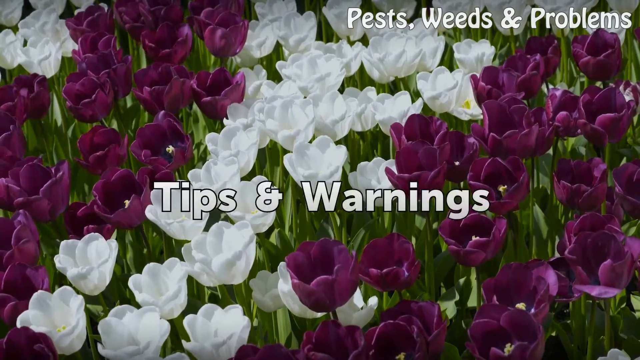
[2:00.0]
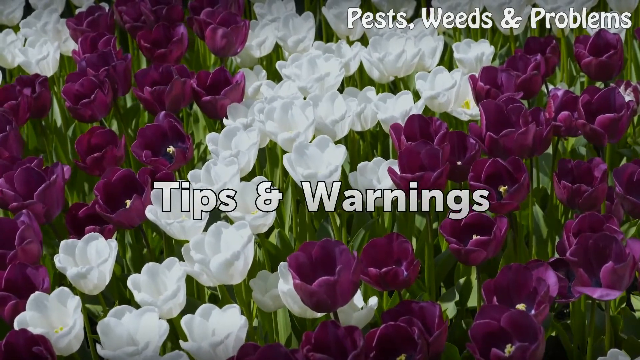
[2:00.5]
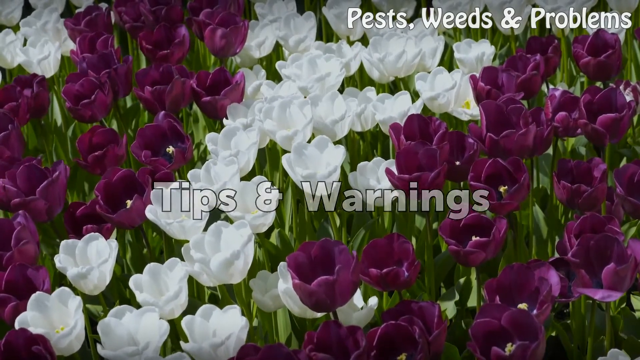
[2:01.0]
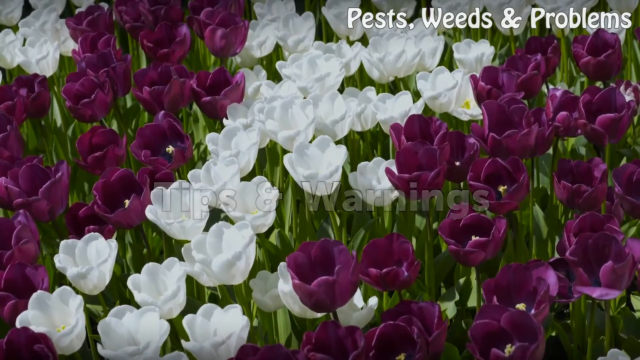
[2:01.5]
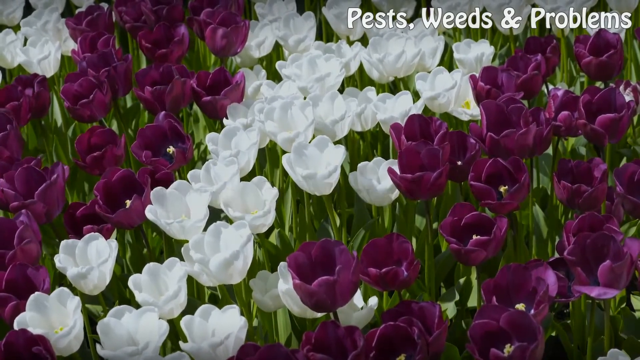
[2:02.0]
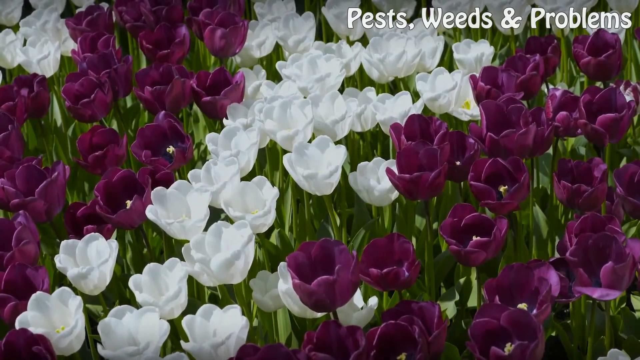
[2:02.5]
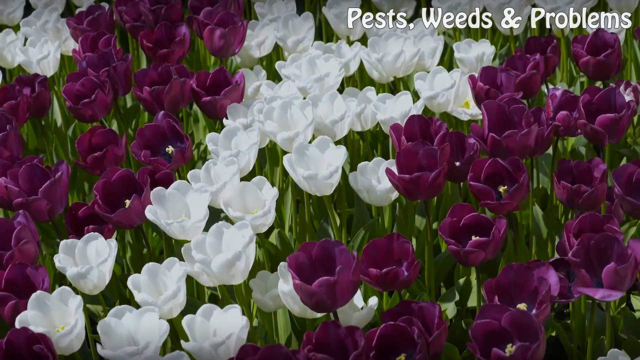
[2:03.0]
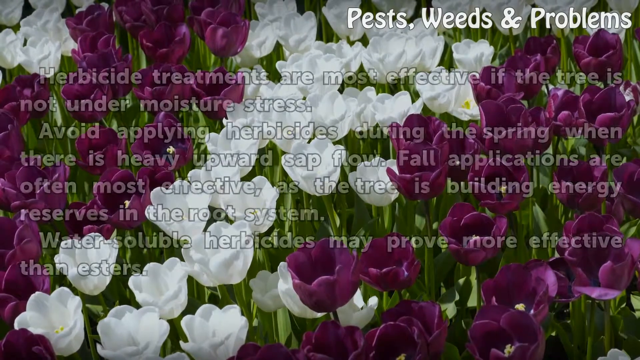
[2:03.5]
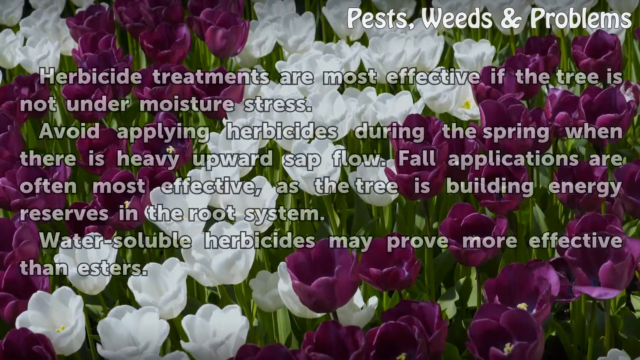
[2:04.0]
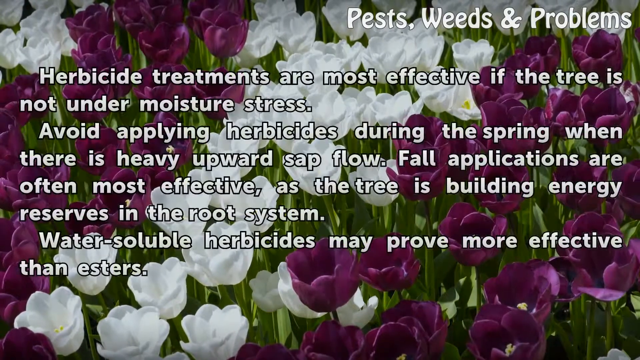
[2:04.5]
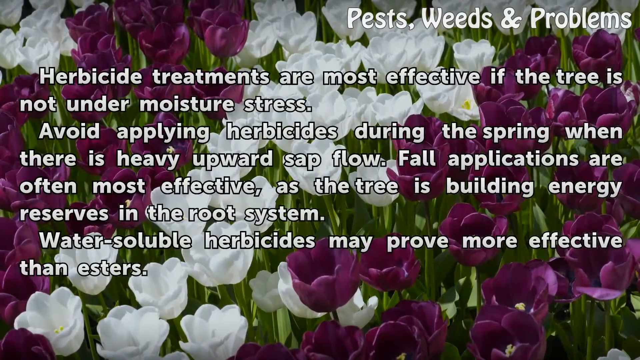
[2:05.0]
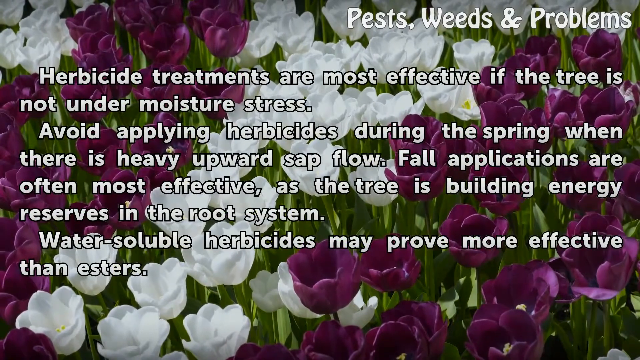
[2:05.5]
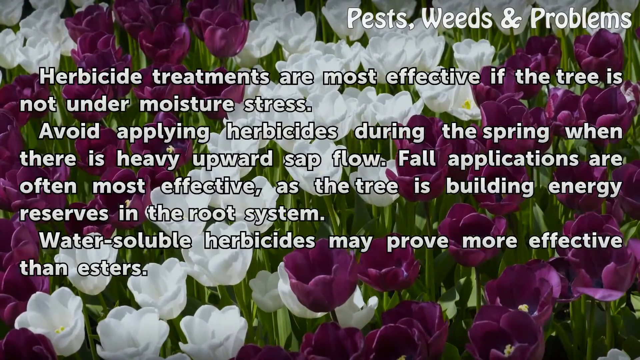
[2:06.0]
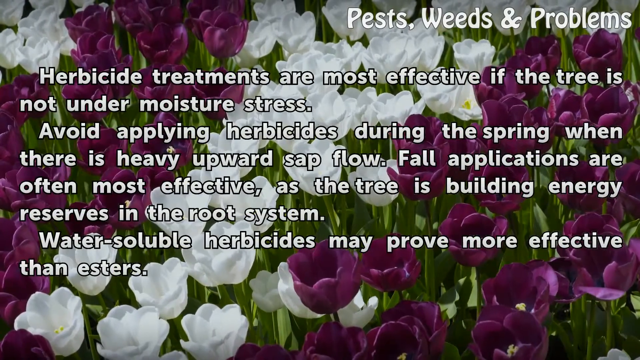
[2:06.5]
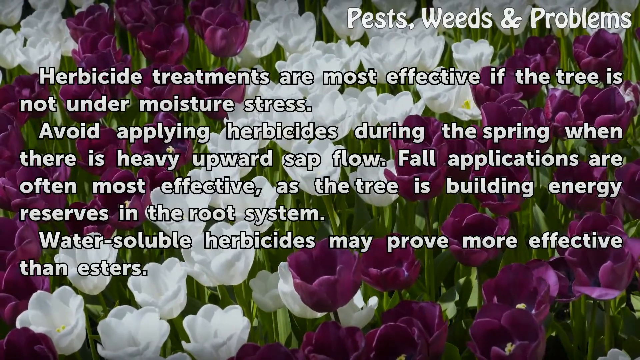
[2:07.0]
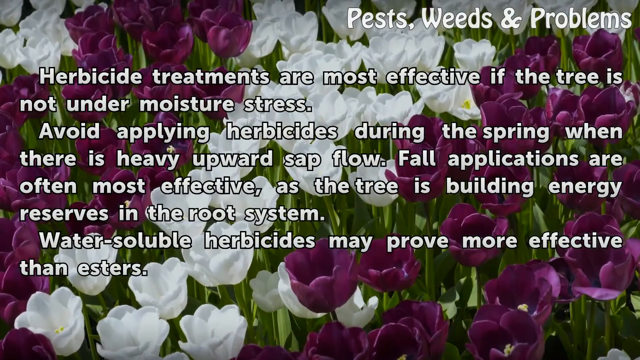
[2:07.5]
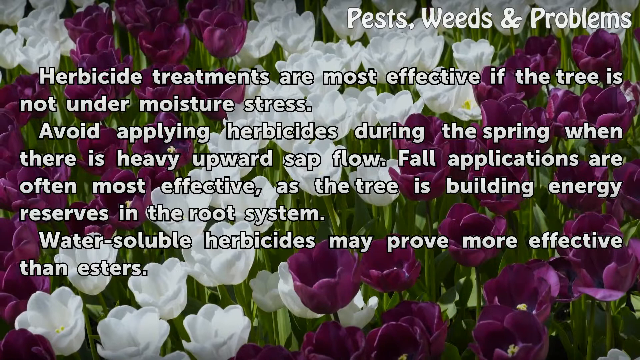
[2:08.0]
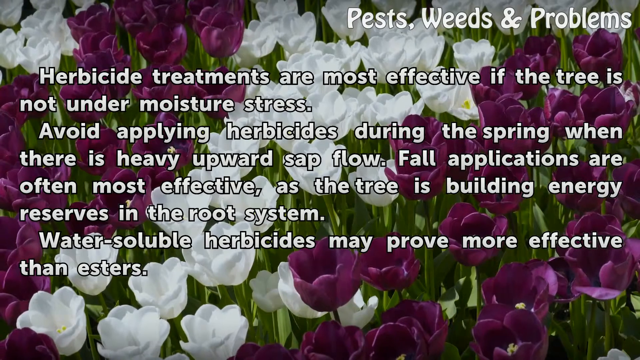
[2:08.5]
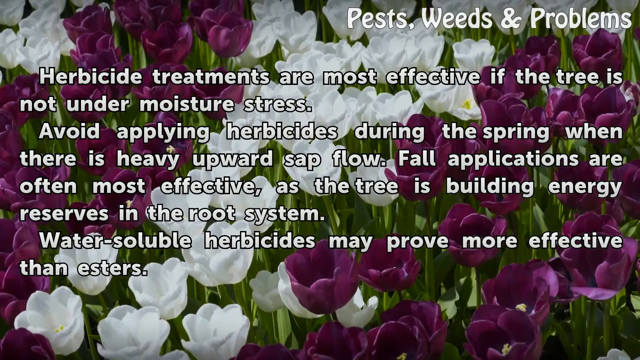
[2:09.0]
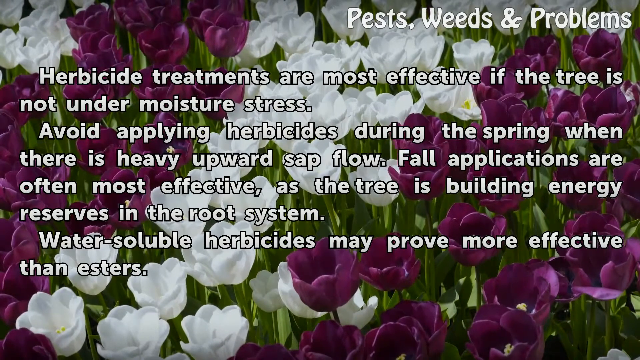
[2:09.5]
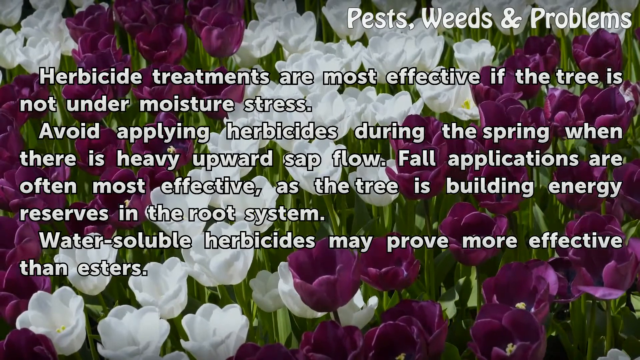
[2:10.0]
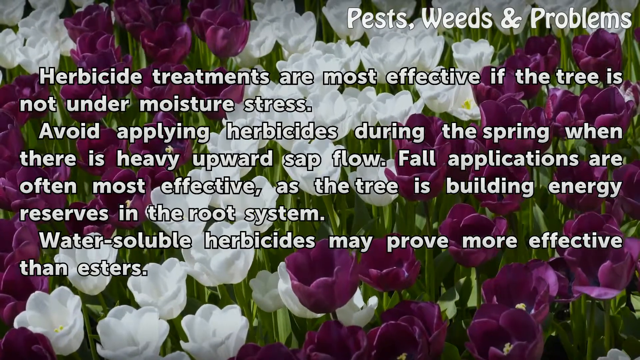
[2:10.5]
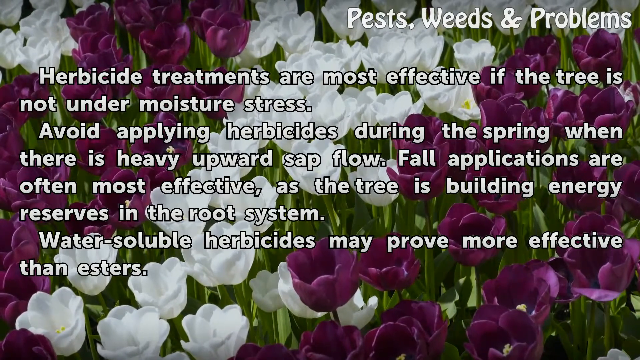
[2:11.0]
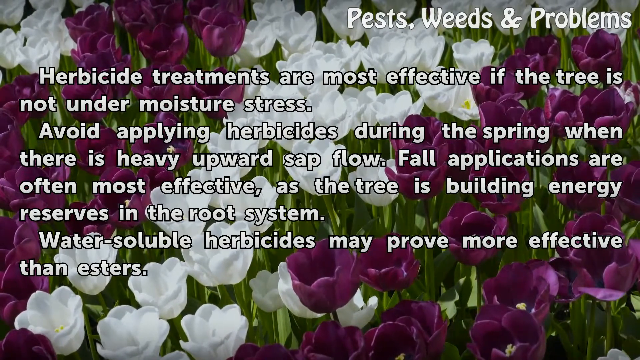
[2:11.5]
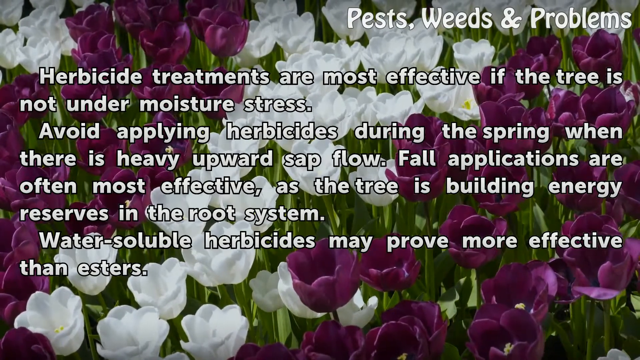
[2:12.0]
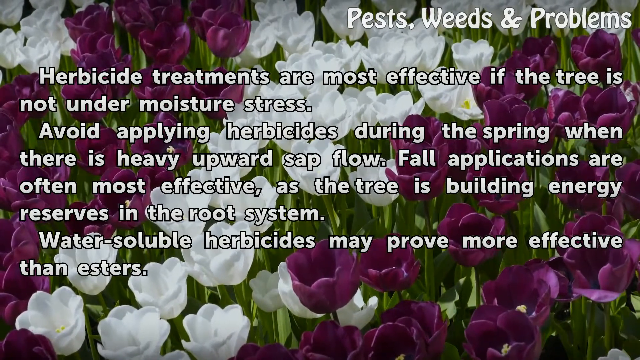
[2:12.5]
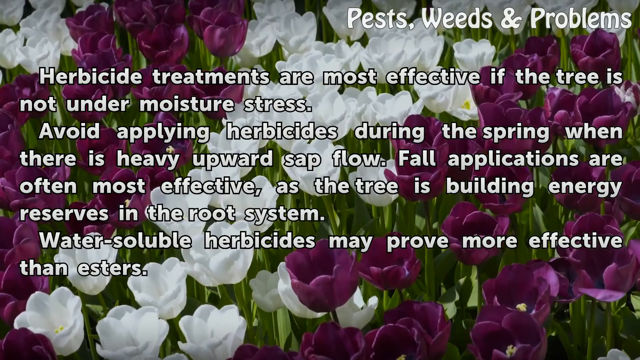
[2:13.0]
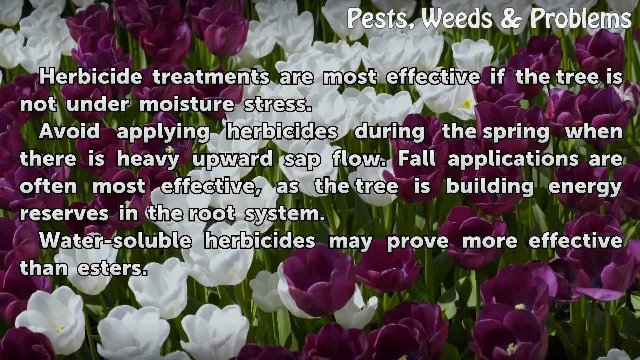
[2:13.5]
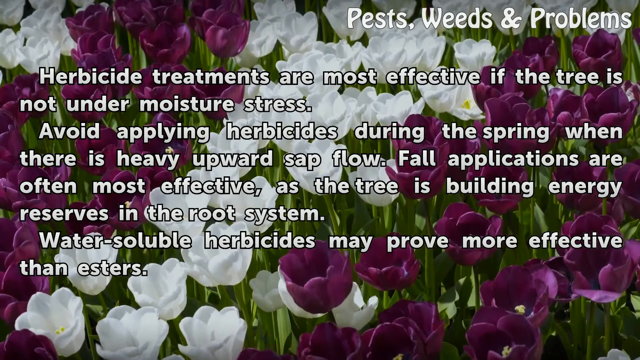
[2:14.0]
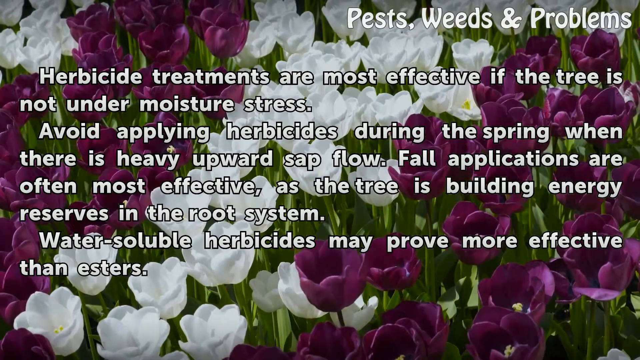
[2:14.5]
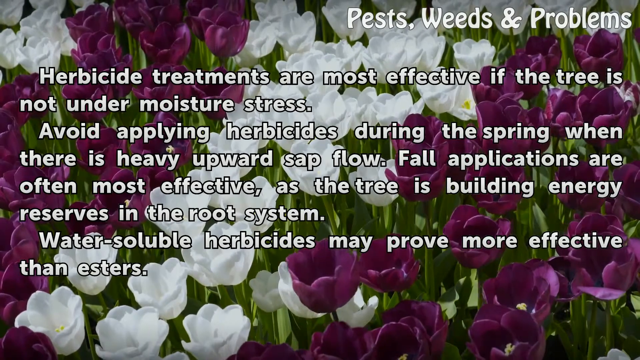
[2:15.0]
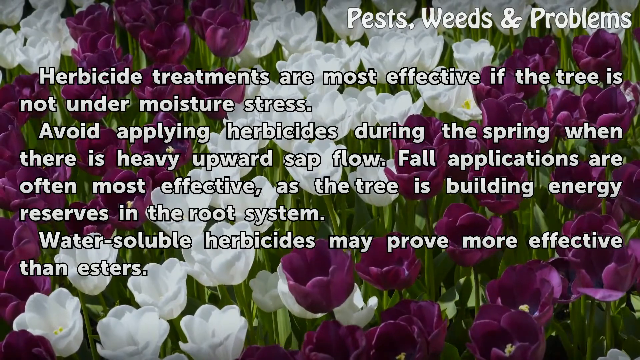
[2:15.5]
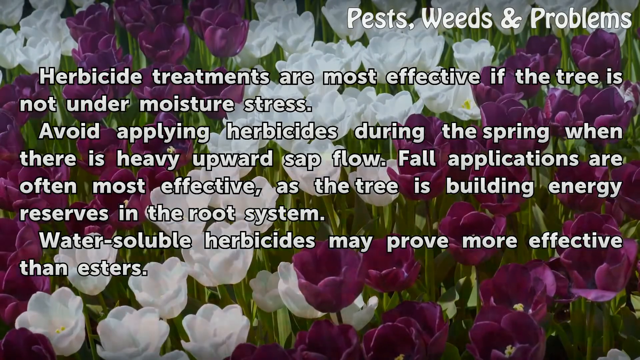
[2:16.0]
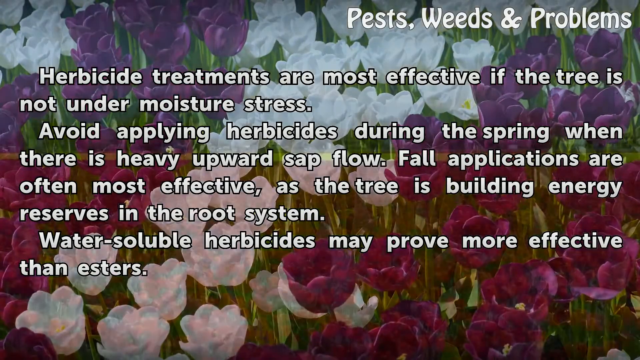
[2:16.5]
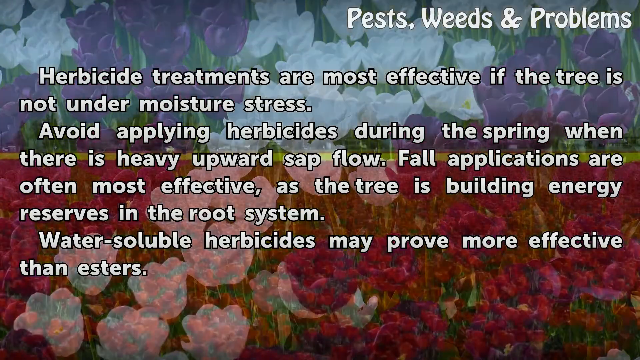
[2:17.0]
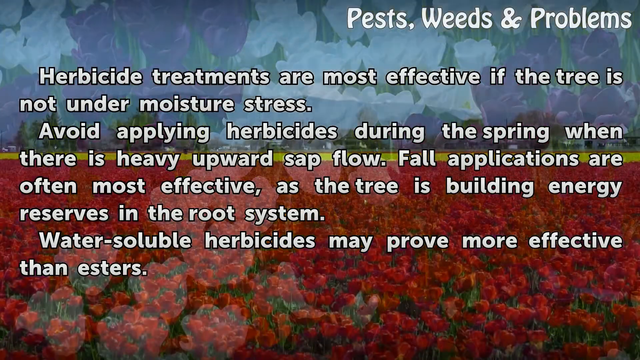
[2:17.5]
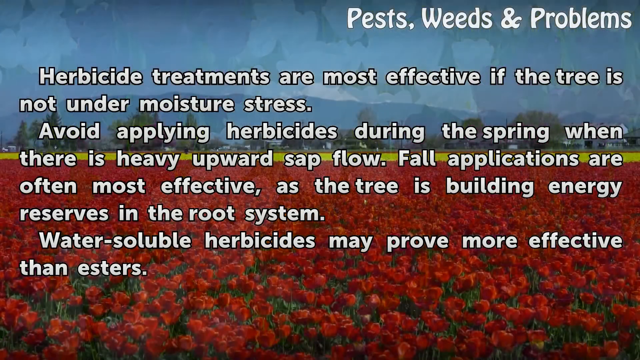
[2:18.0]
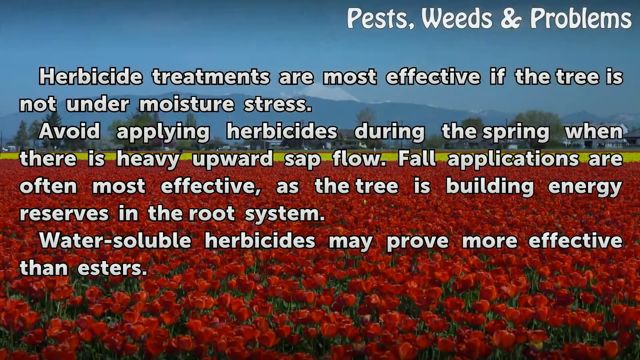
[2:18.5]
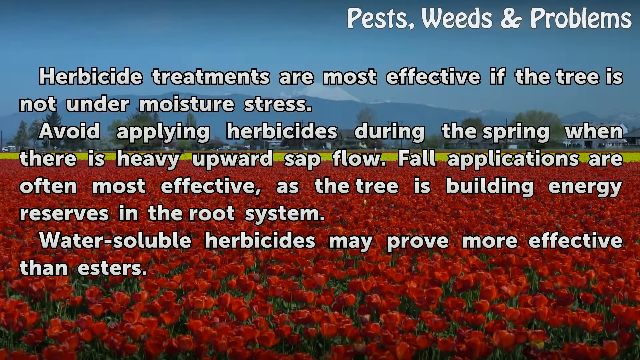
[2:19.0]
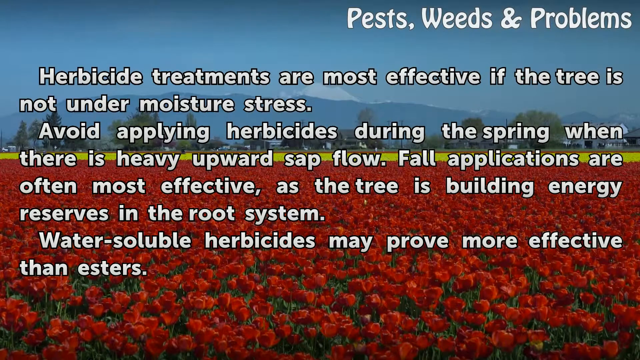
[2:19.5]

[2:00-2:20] The background flowers form a pattern: in the upper left-hand corner they are white, then purple, then white, then purple. The section is titled "tips & warnings". Text reads "herbicide treatments are most effective if the tree is not under moisture stress." The next paragraph reads "avoid applying herbicides during the spring when there's a heavy upward sap flow. Fall applications are often most effective as the tree is building energy reserves in the root system. Watered-down soluble herbicides may prove more effective than ESTERS." The text is white with a black outline, and the heading for the new section is in the middle of the screen. The background then changes to a bunch of red flowers, which are up for only a second or two.